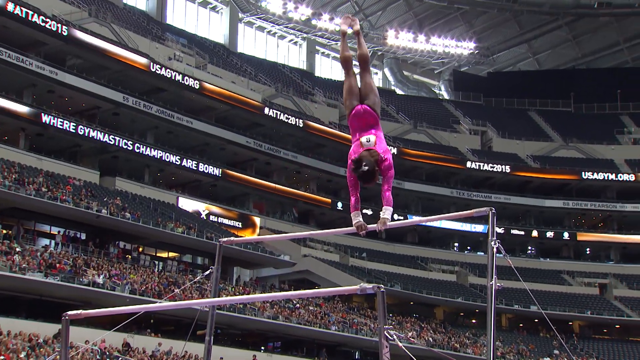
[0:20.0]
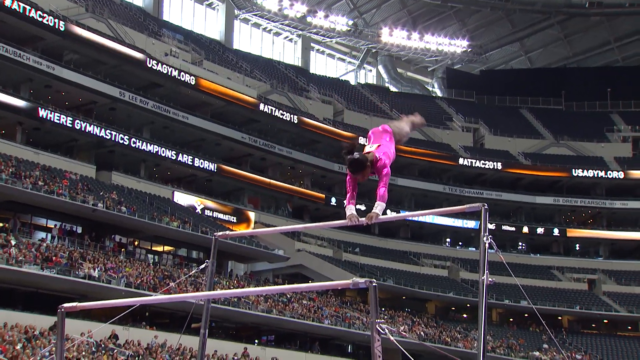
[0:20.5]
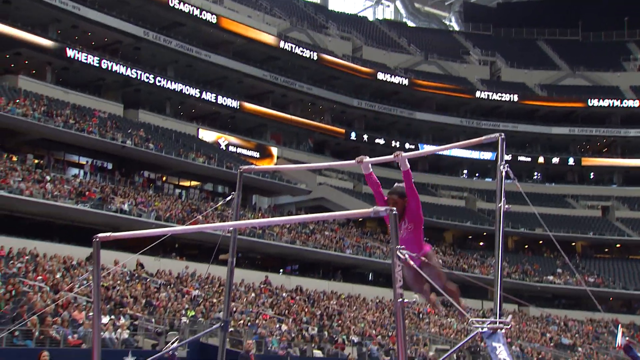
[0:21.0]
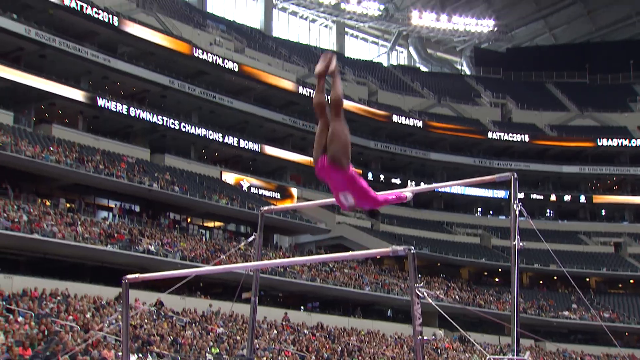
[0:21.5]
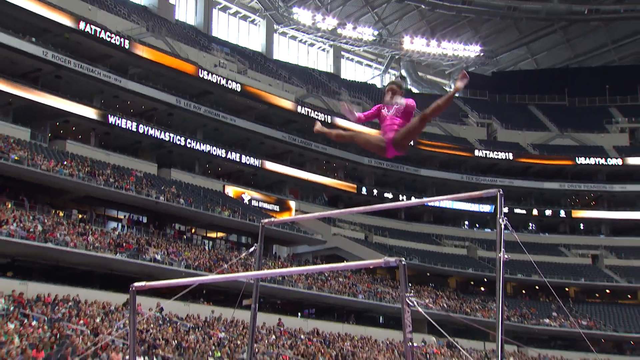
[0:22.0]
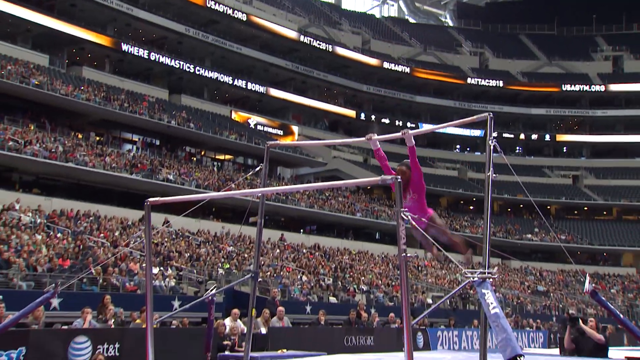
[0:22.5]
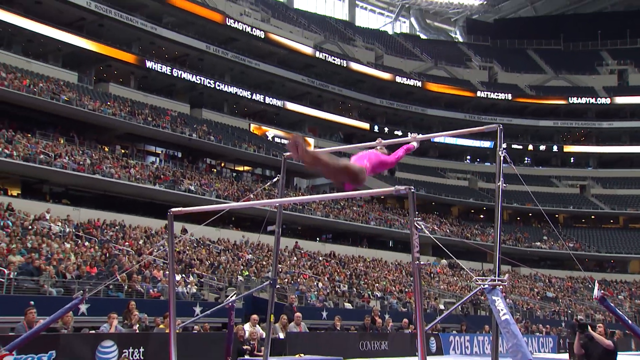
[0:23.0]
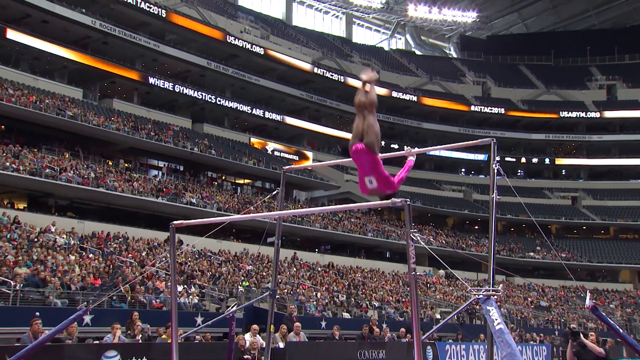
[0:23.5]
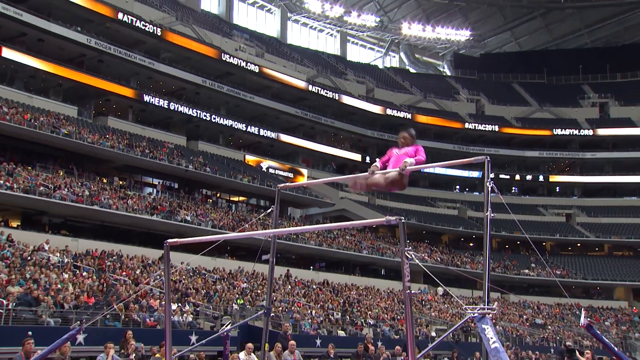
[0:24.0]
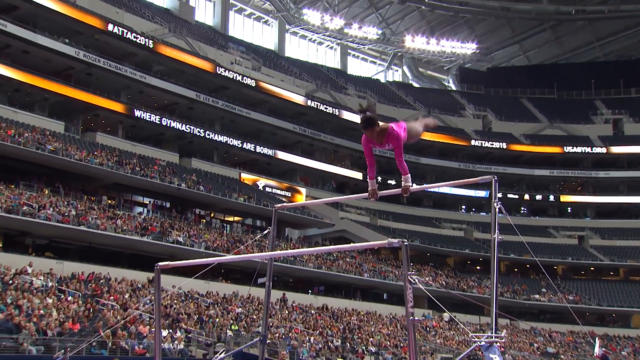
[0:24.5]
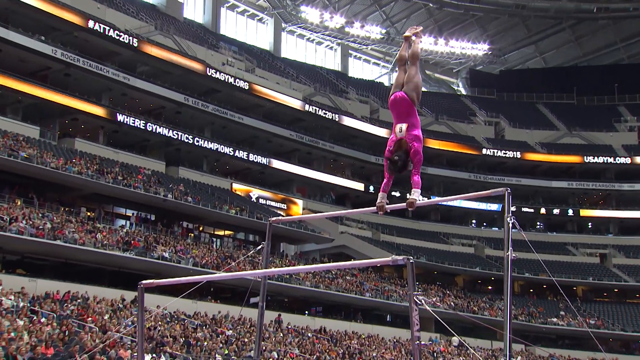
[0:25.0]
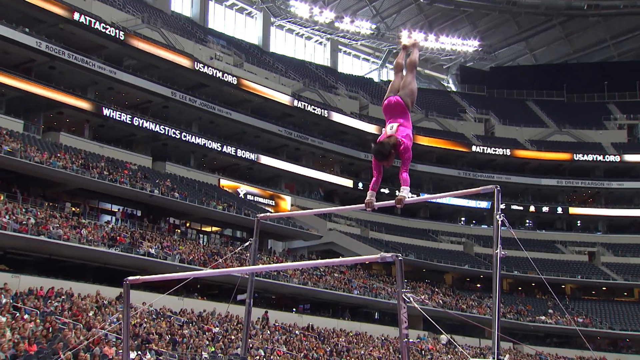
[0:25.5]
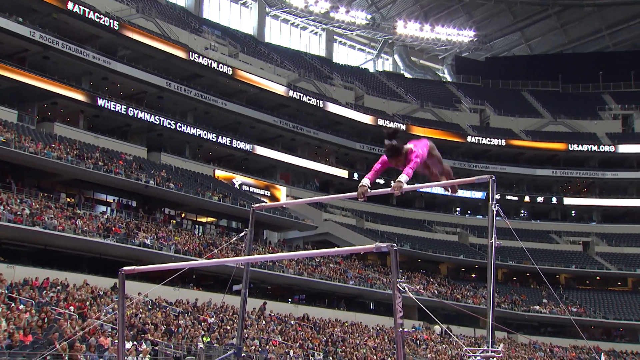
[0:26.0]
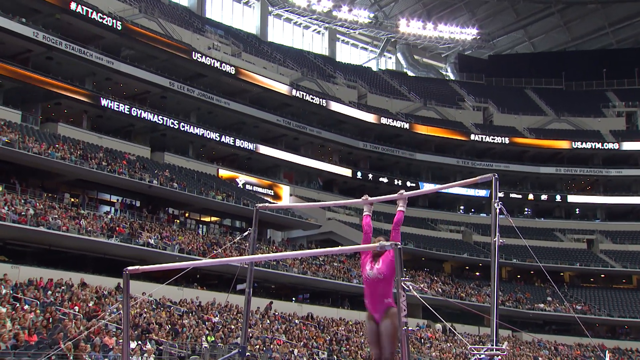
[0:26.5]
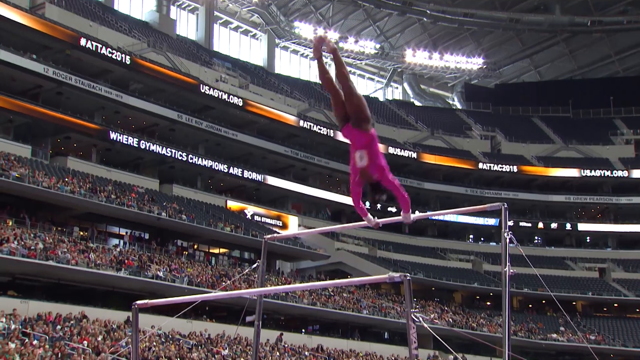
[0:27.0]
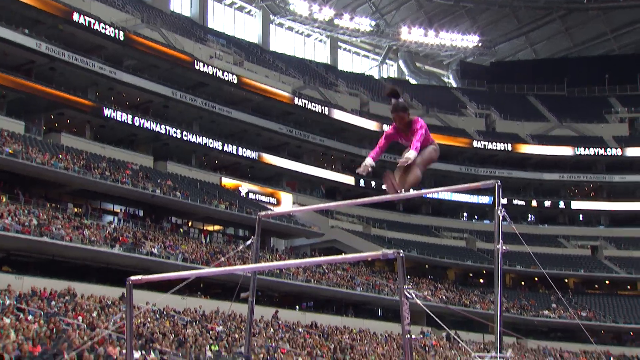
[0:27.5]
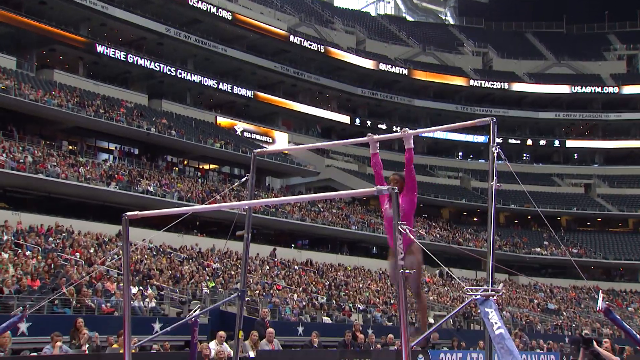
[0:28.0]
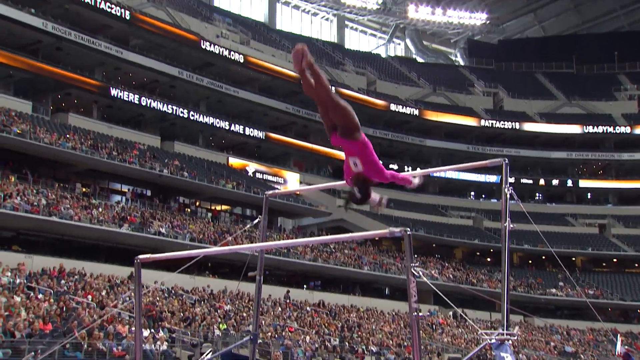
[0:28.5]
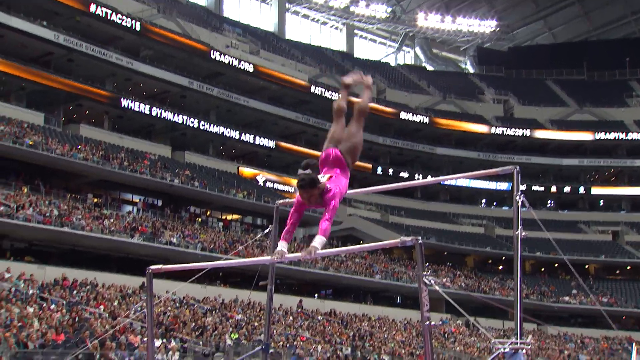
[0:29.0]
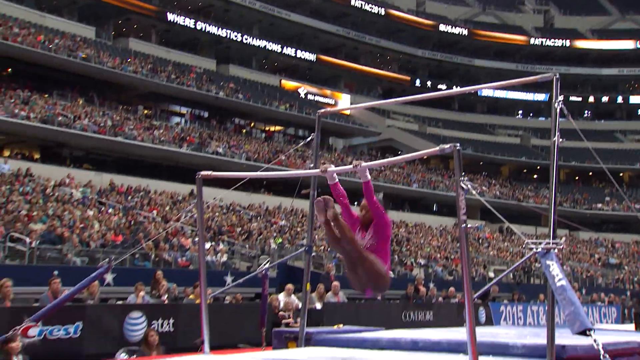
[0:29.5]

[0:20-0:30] The same gymnast is still on the second, higher bar. She spins around from under the bar, and as she gets back to the top she suspends herself in midair before grabbing the bar again. As she goes back under once more, she again suspends herself and then latches onto the ground-level bar. A large audience seems to be watching her performance.